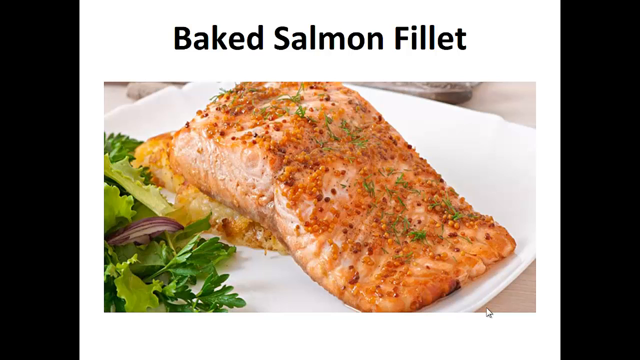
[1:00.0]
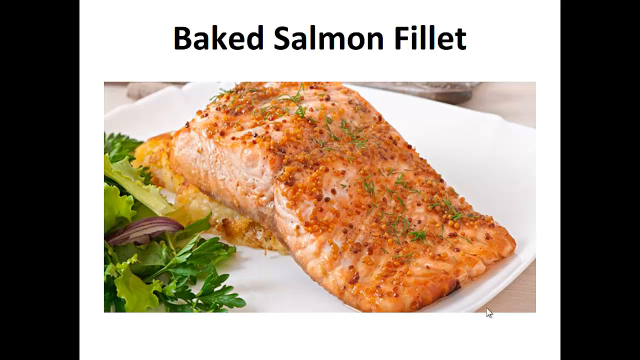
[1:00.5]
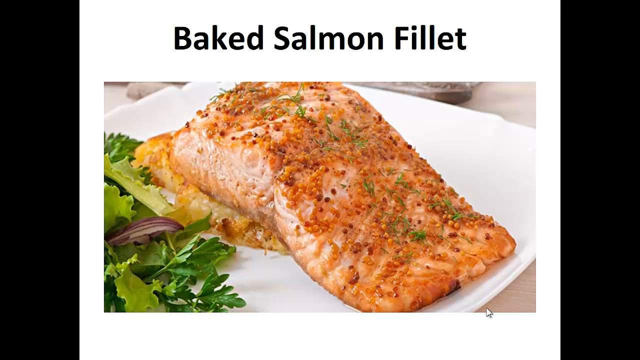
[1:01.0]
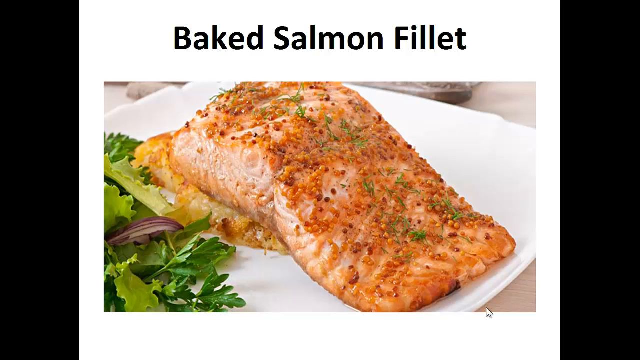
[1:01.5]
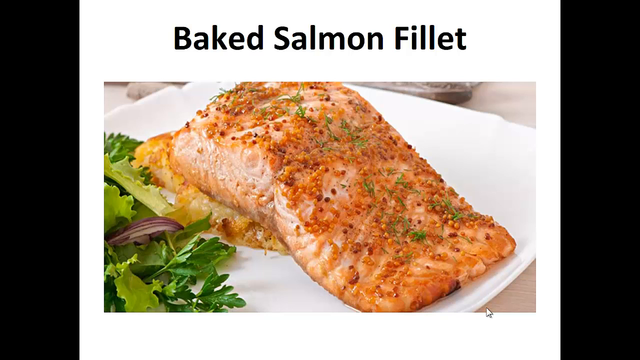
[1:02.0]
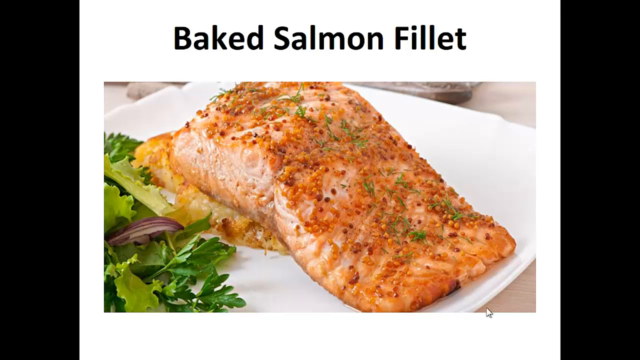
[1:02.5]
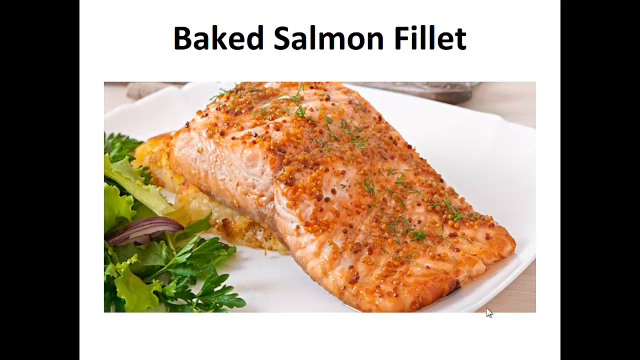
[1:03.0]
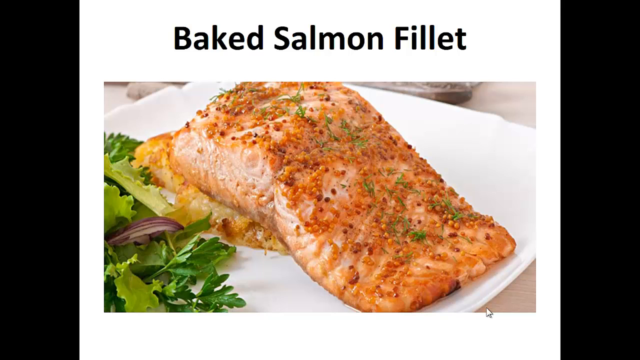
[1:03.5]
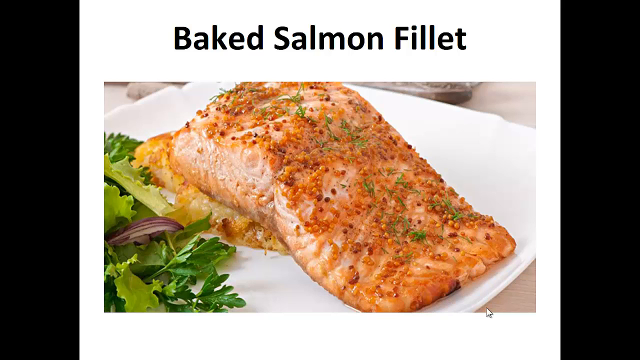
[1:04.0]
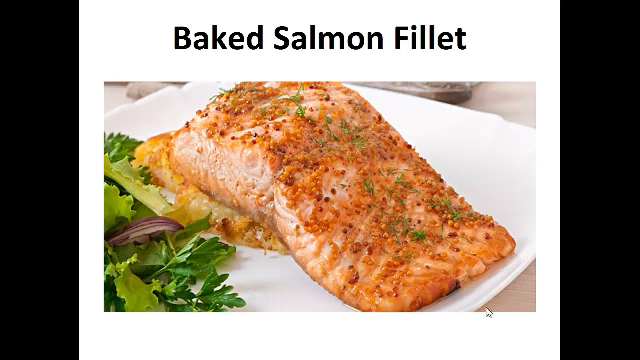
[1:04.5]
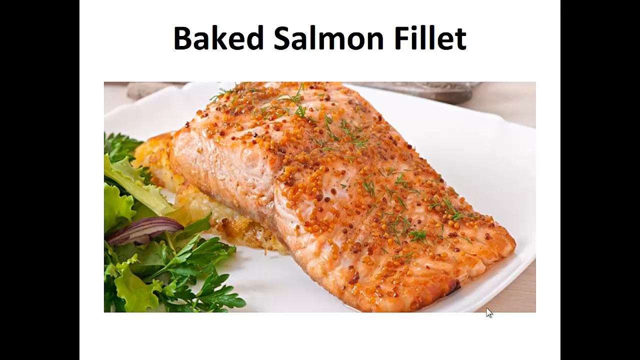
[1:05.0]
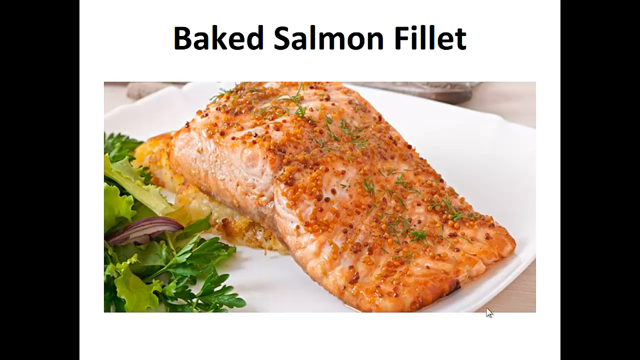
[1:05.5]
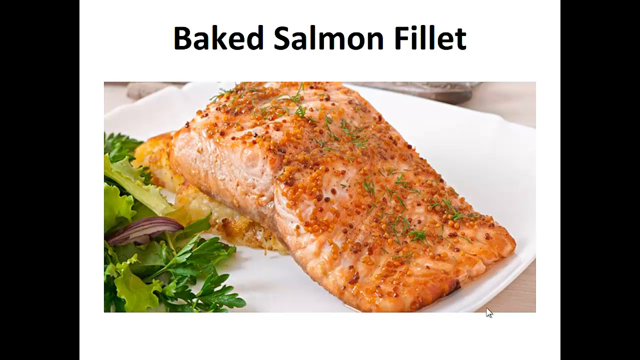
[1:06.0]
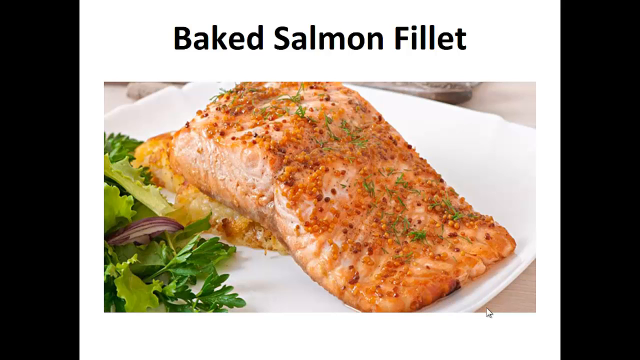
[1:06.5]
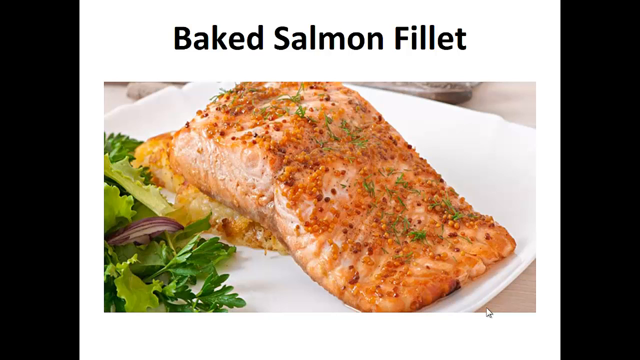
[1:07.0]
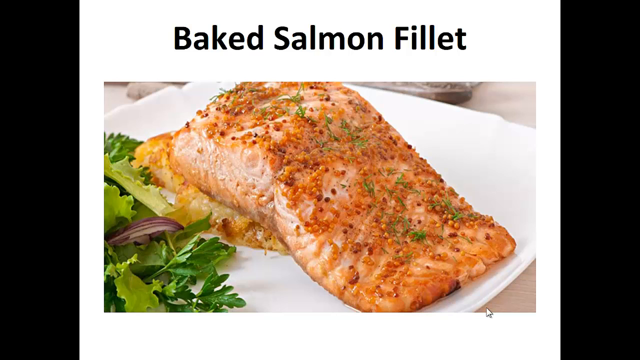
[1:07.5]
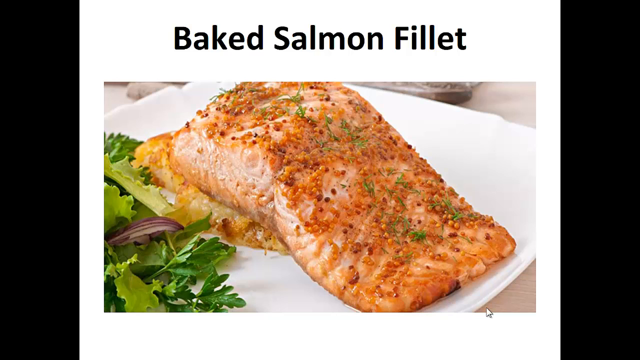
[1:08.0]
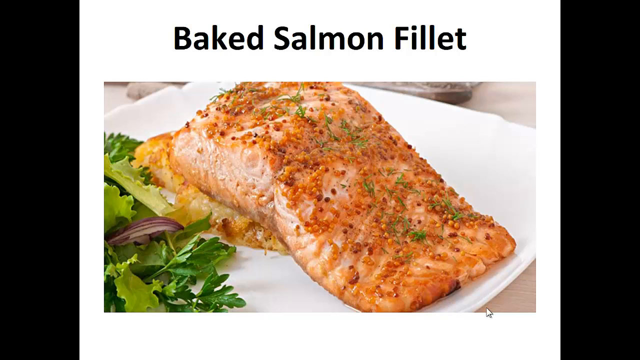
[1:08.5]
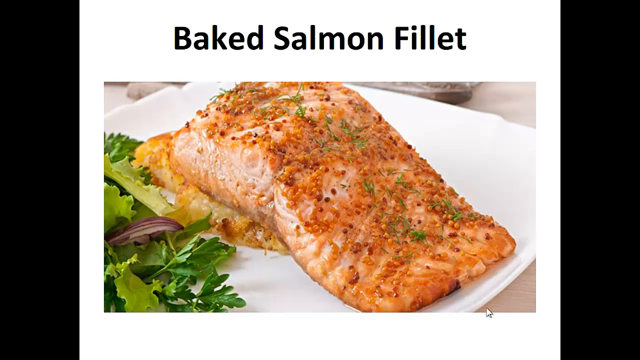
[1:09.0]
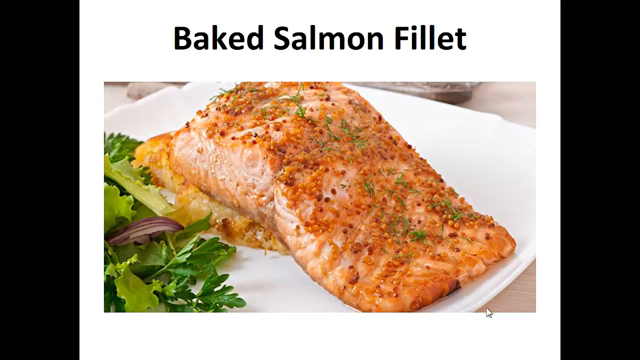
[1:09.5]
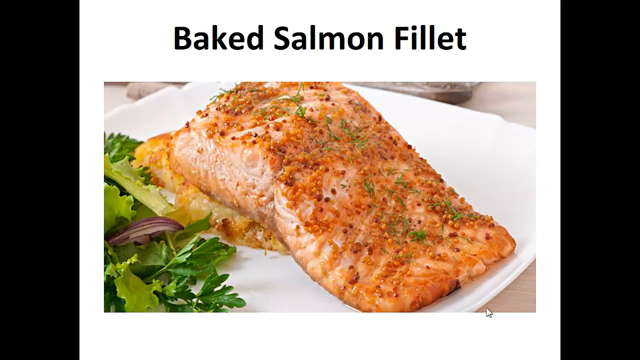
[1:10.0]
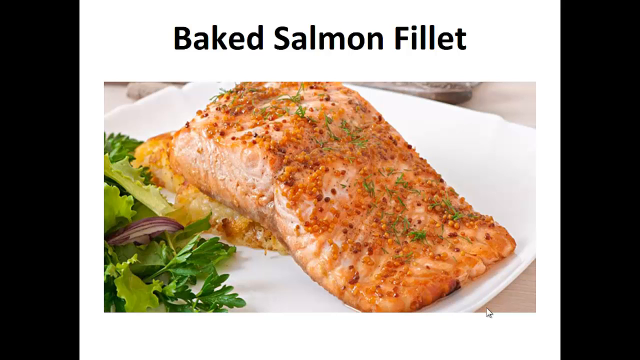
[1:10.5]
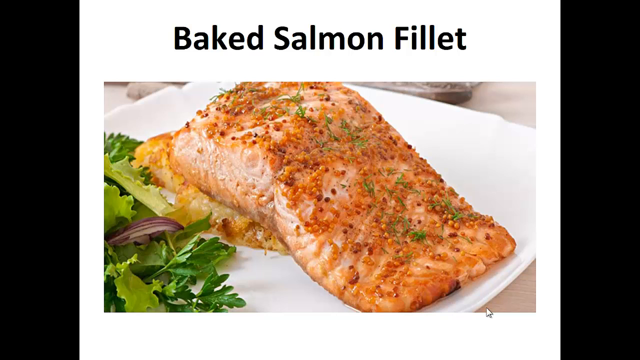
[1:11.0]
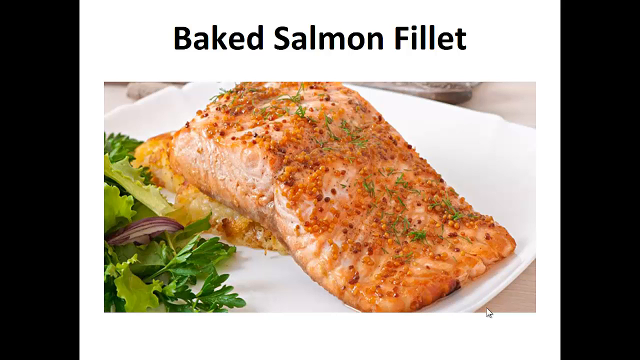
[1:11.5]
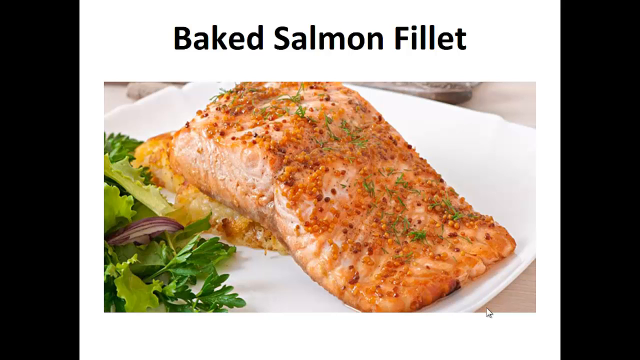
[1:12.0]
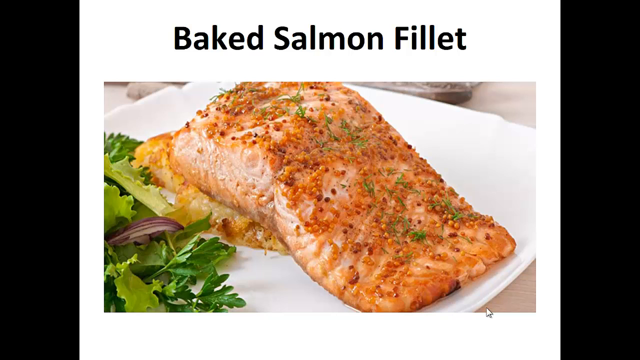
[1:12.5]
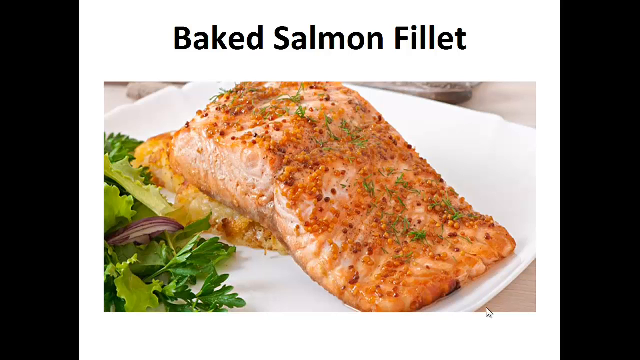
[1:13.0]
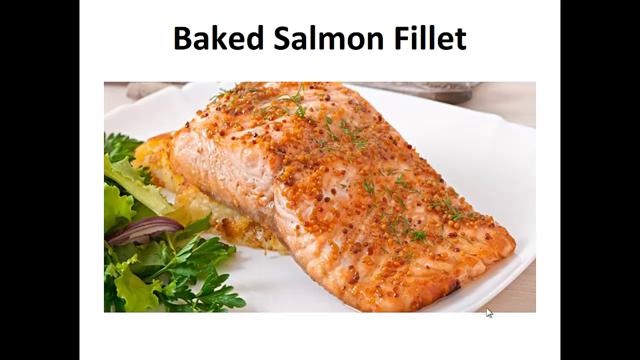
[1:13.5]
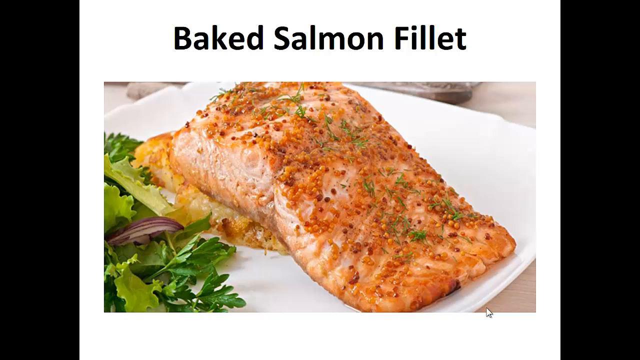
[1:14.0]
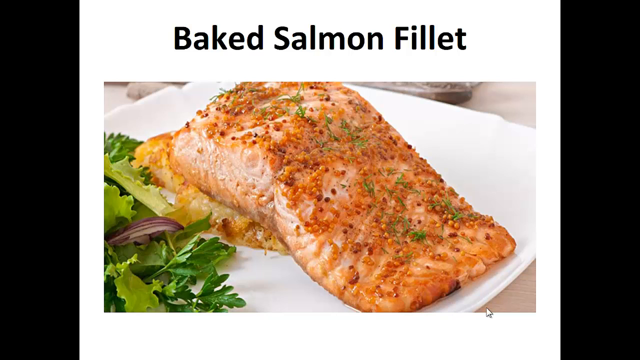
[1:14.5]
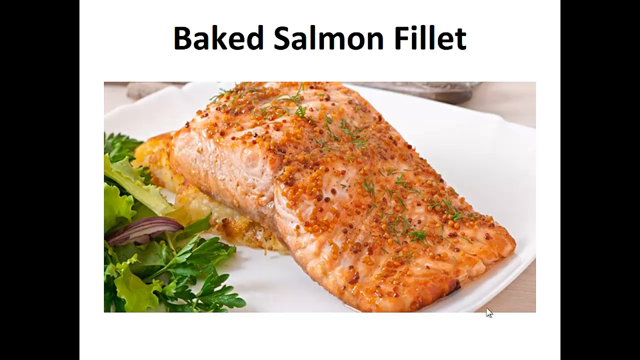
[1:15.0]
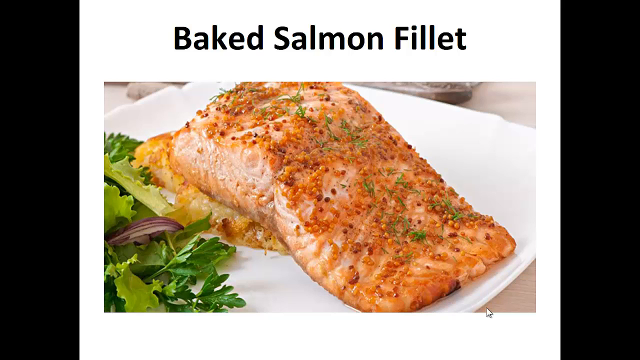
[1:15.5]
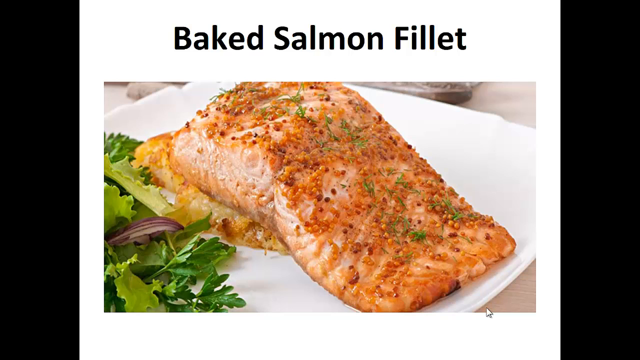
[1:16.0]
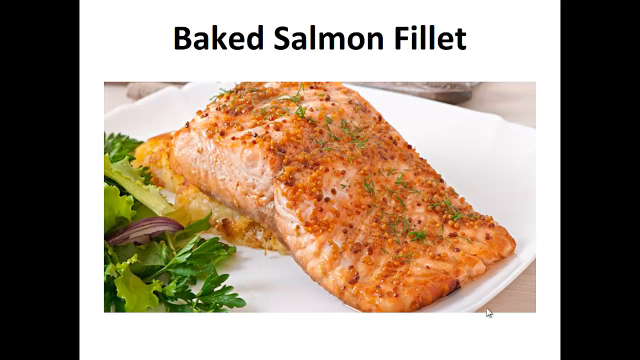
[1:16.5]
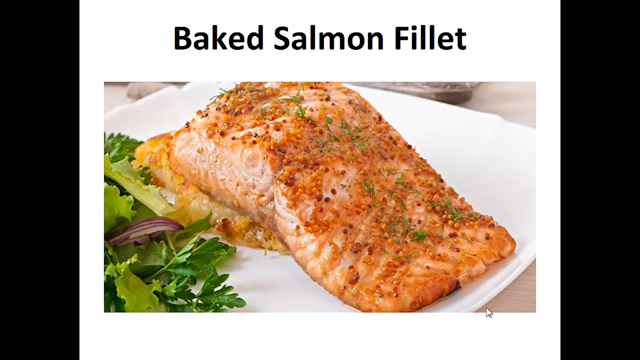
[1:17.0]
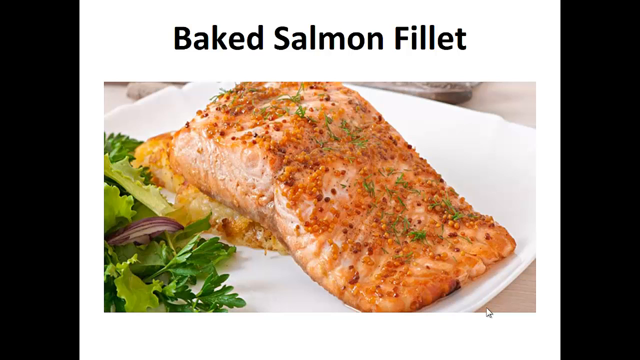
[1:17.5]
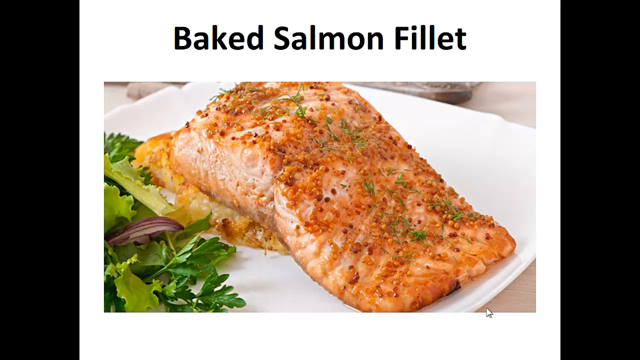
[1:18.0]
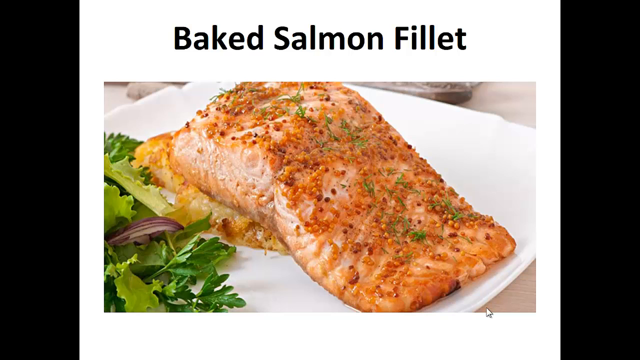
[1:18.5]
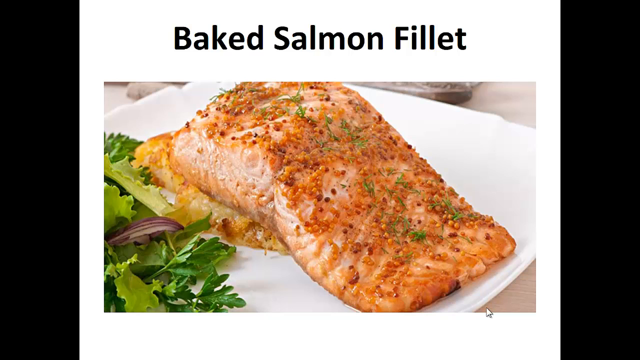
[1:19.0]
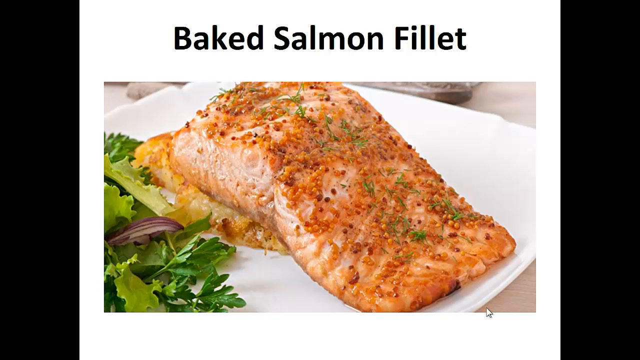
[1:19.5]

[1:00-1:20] The image is a still photo. The salmon is browned and looks golden, clearly not raw. Under the fish there is something that looks like a mesh or some sort of sauce, and something not too thick and brownish or goldish is on top of the salmon, possibly a sauce or dressing. Red onion is on the plate.